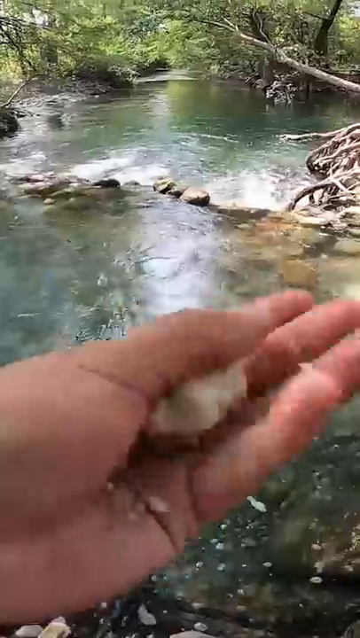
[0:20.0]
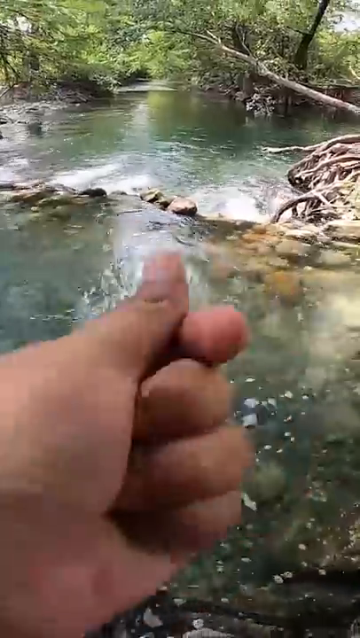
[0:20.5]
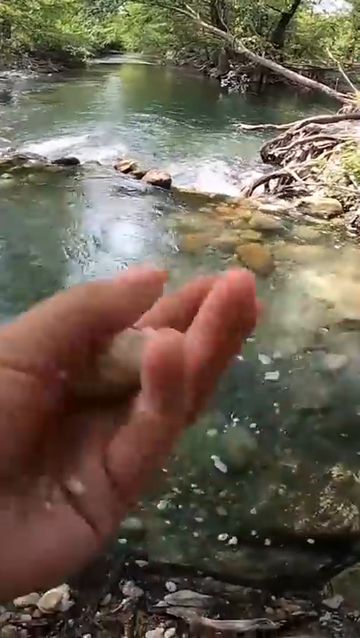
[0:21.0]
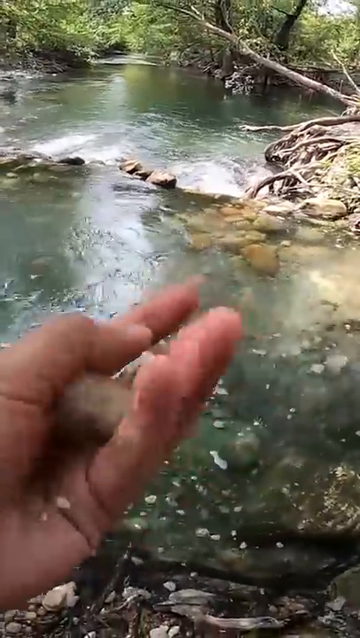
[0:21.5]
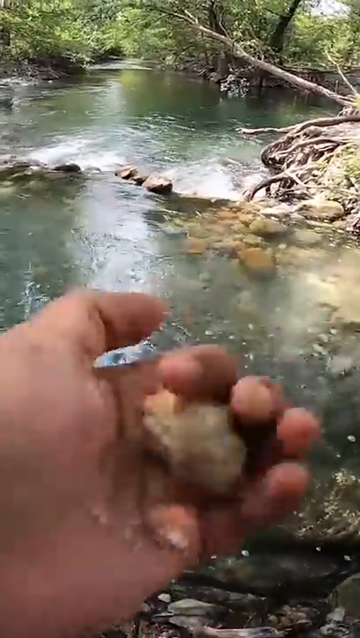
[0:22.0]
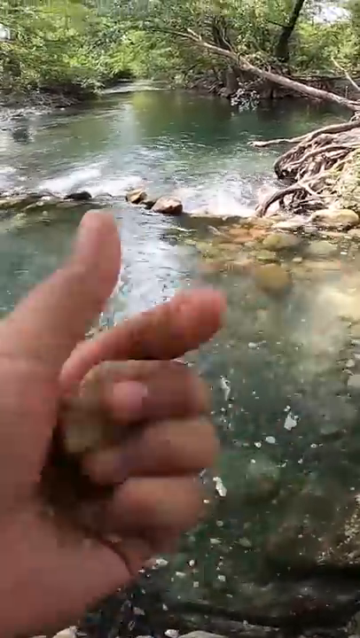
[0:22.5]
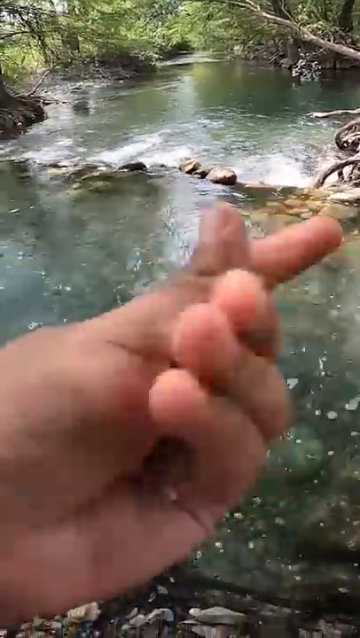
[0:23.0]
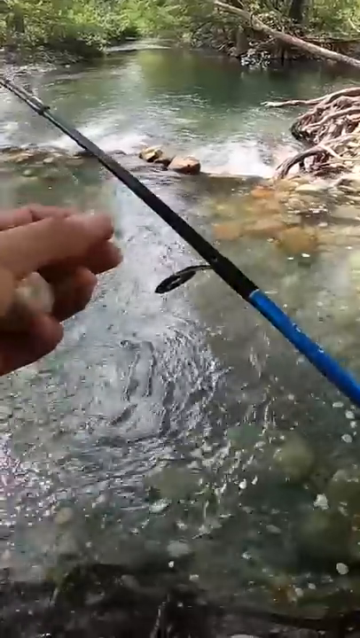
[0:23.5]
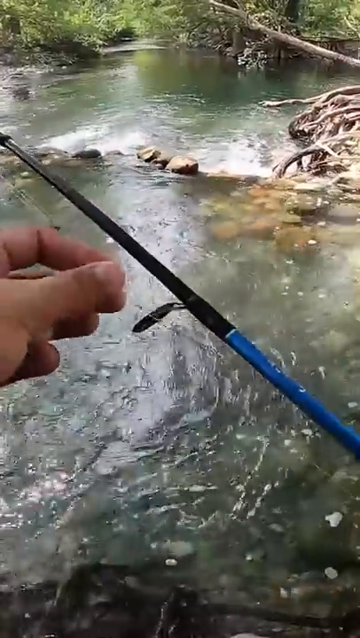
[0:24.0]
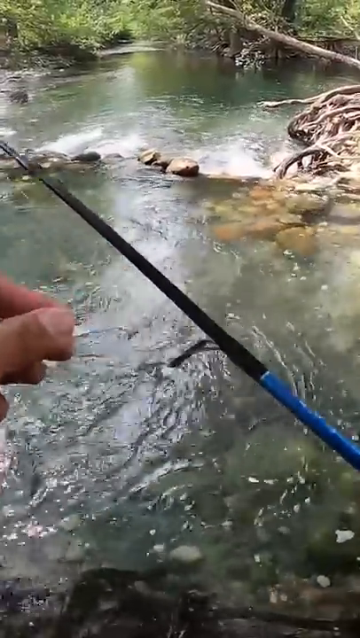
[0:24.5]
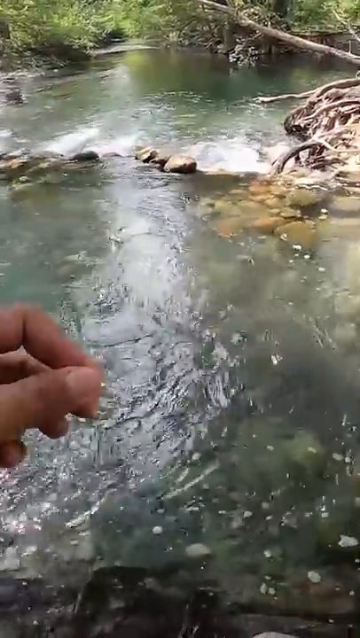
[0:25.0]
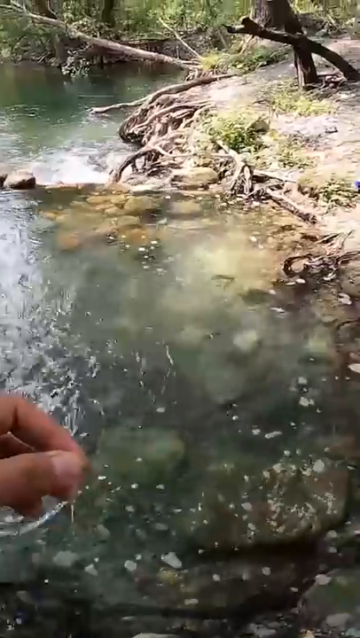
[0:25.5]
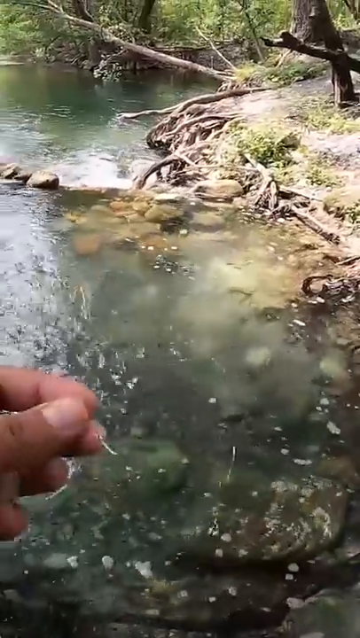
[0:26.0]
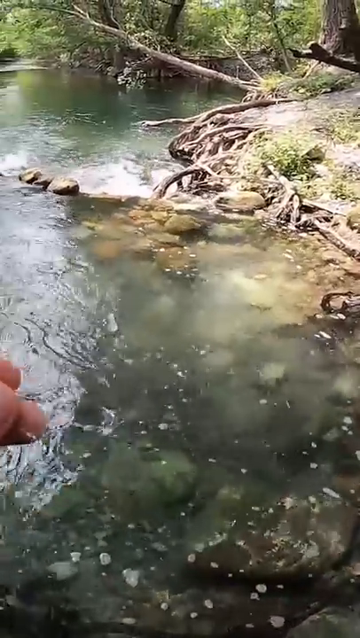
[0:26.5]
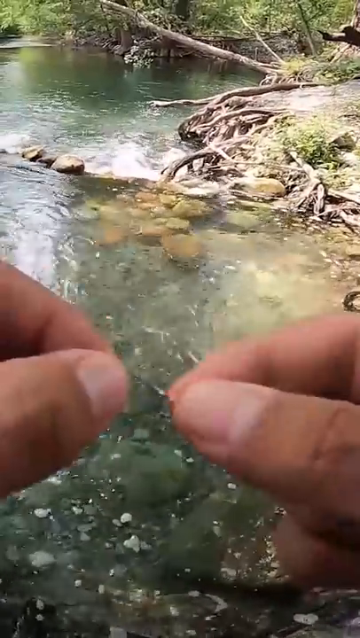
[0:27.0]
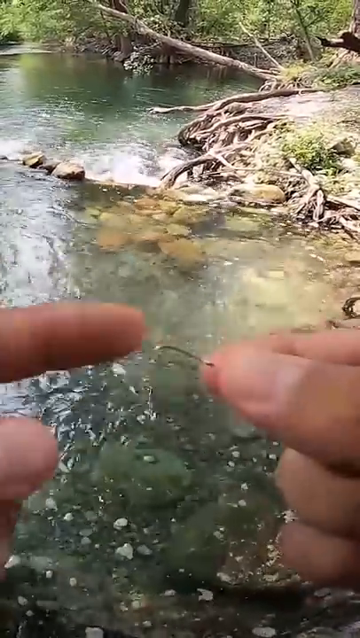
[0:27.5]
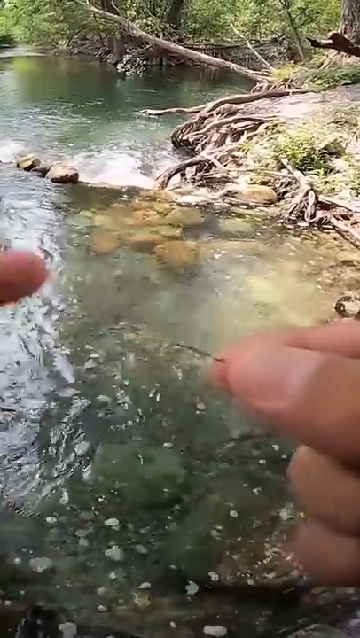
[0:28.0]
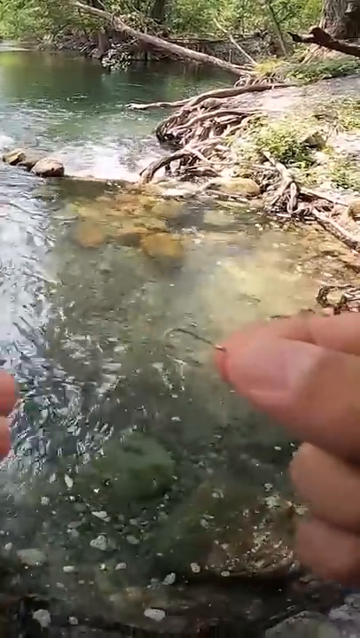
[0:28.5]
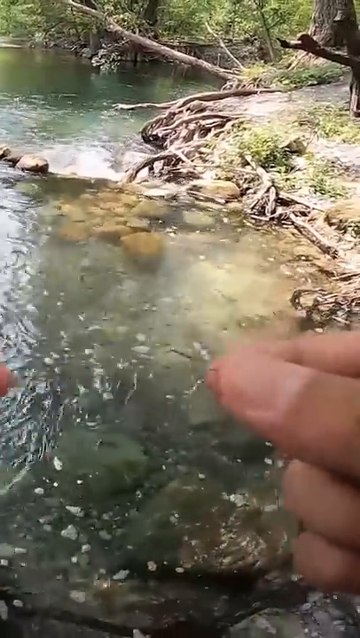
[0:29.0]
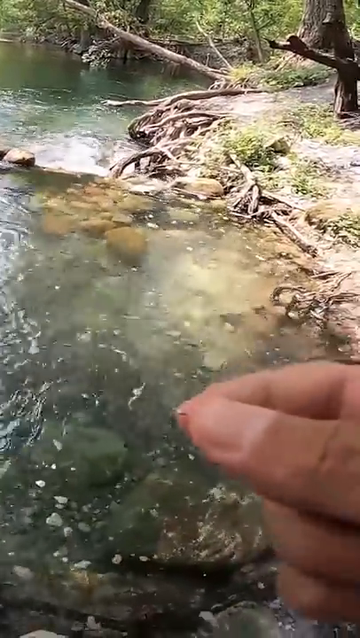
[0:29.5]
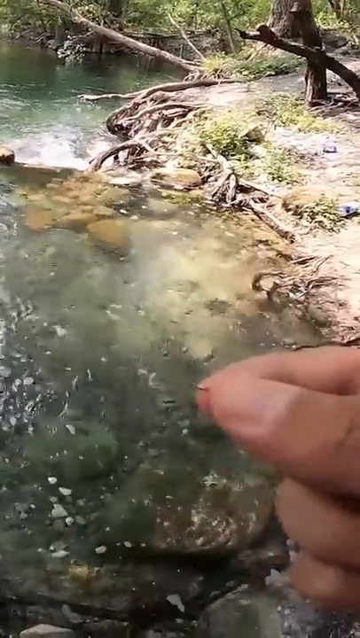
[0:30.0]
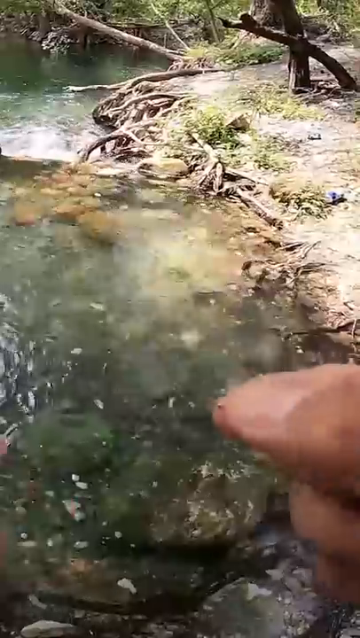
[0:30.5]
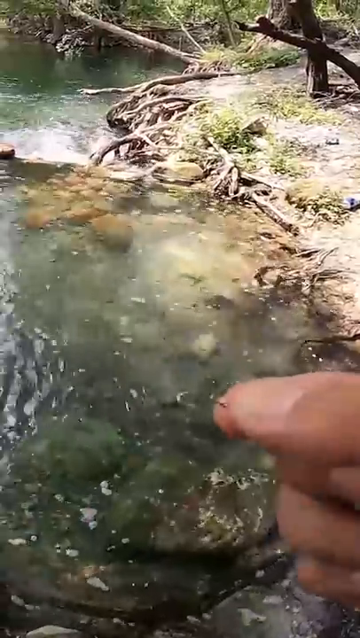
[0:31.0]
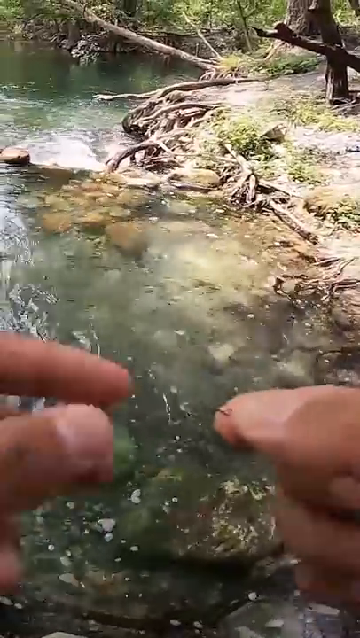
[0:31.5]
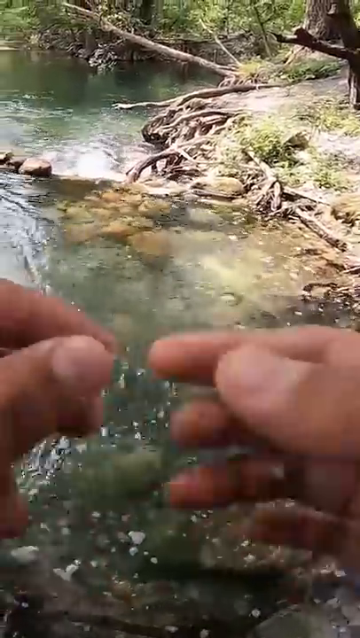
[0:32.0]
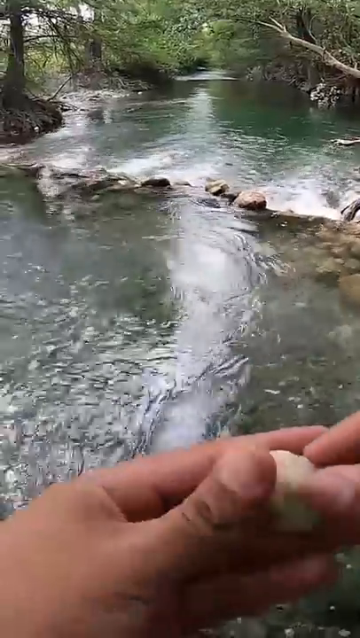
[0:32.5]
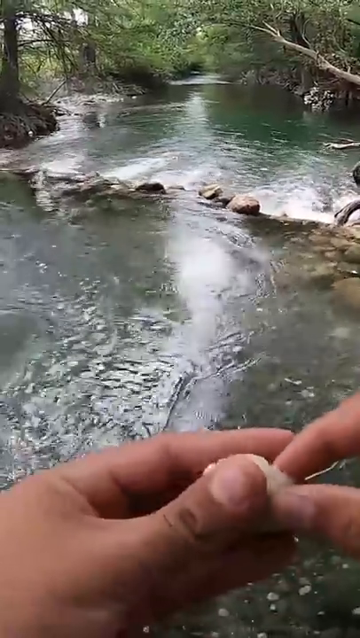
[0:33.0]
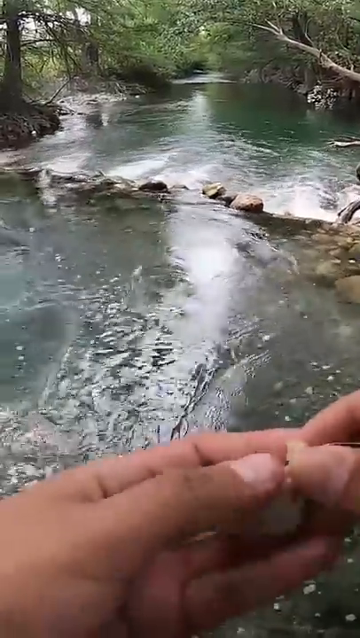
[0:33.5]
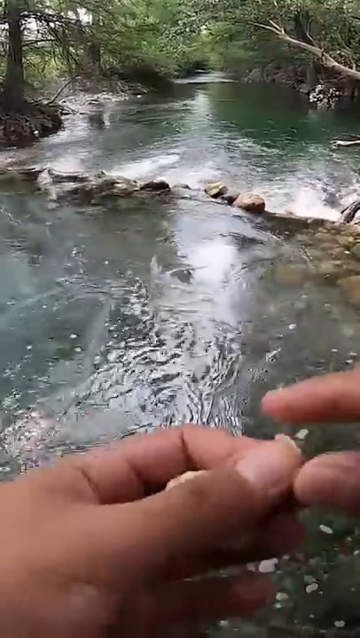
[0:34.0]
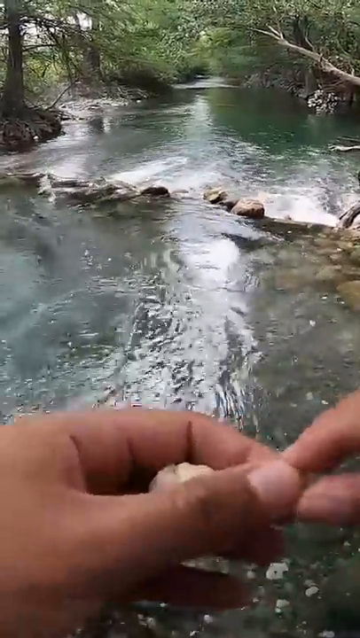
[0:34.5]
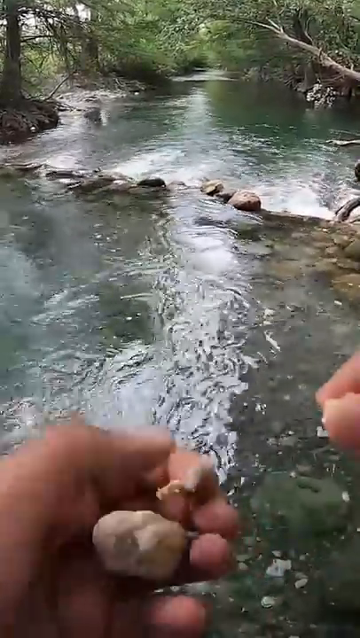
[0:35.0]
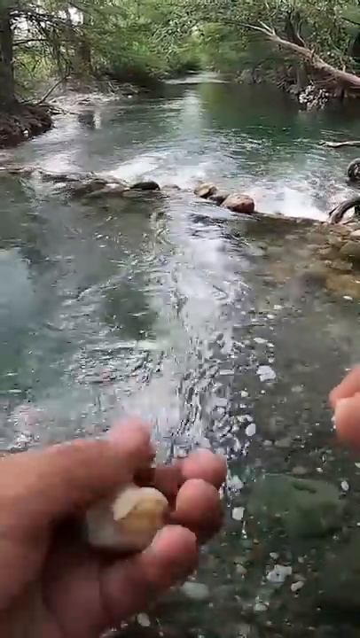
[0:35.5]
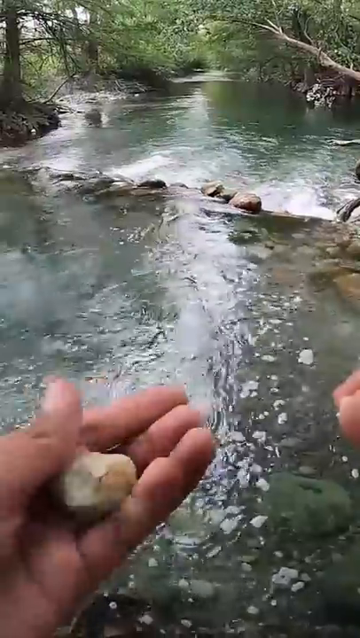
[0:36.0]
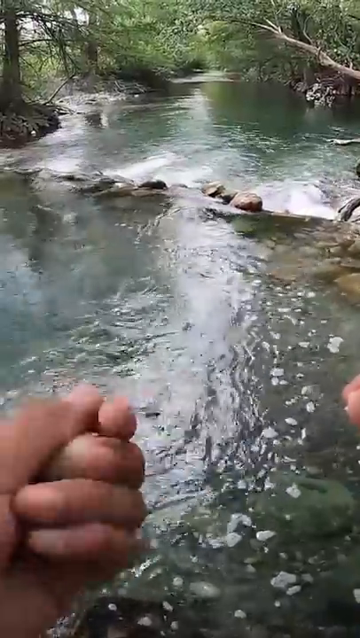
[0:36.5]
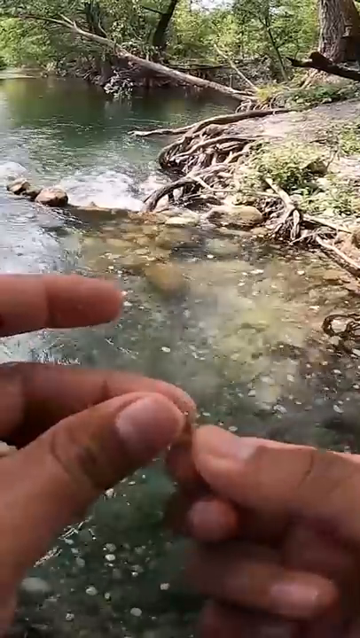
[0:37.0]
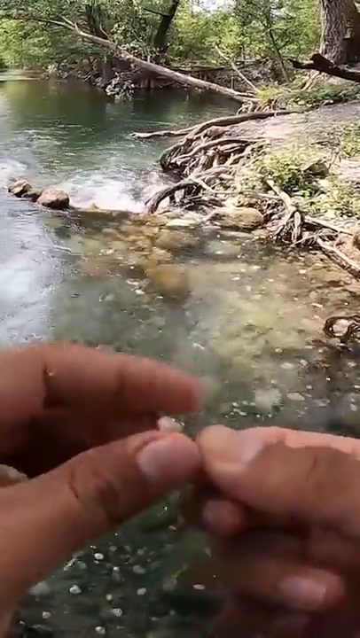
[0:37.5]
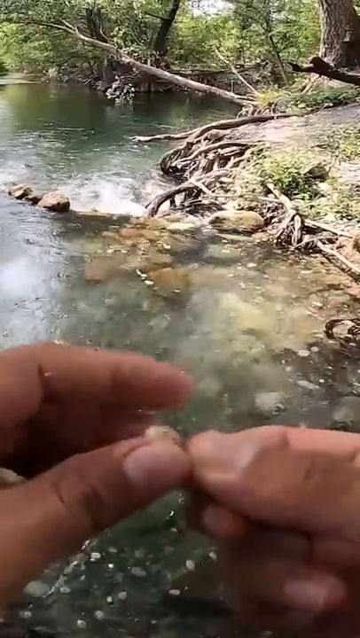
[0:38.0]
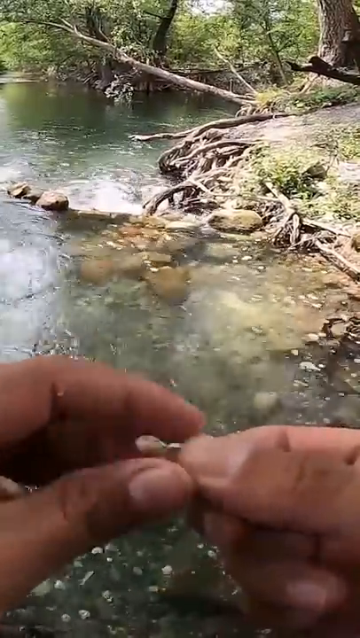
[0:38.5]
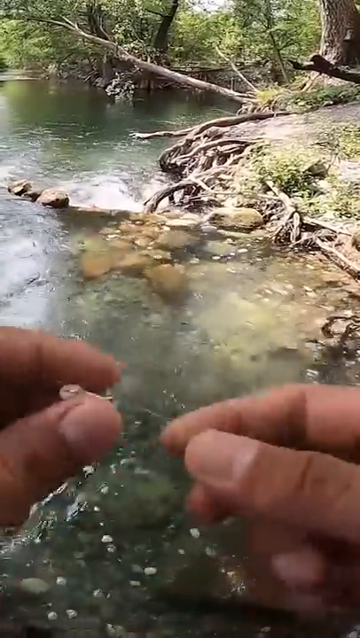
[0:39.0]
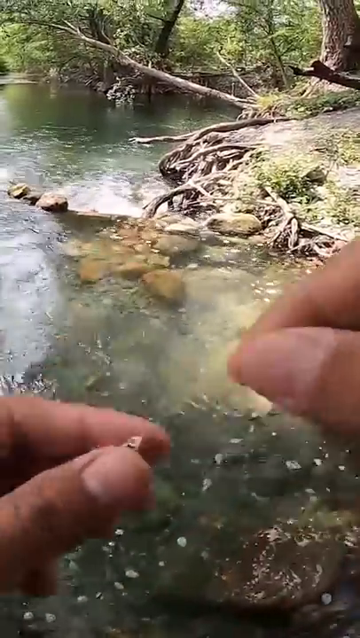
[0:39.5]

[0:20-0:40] The person rolls the moistened bread into a ball. They have a fishing pole with a line and a hook at the end, and holding the hook in their hand, they take a tiny piece off the bread ball and put it on the end of the hook. The hook is small and hard to see, smaller than a fingernail, and silver. The fishing pole is blue and black. The line is really thin, almost invisible. The water is very shallow but flows pretty quickly; the current is visible, along with the little drop-off and some white water forming little rapids at the base. It is a river with fast current rather than a still pool.